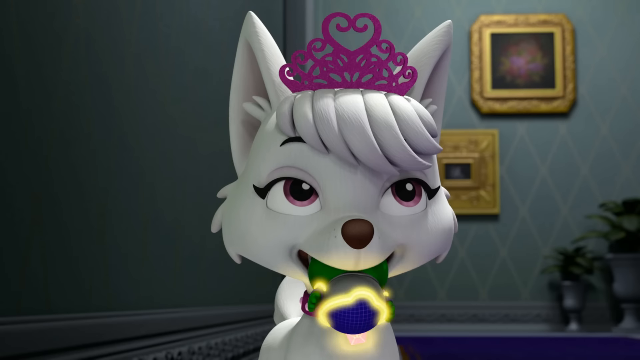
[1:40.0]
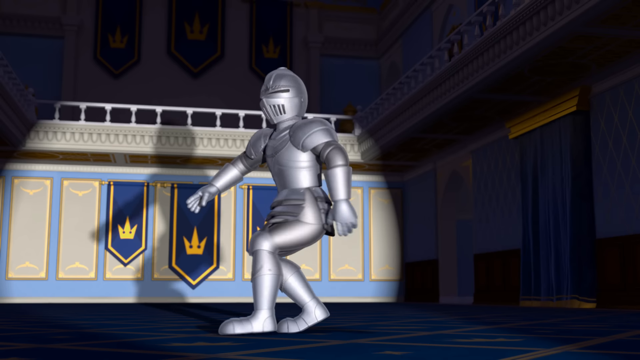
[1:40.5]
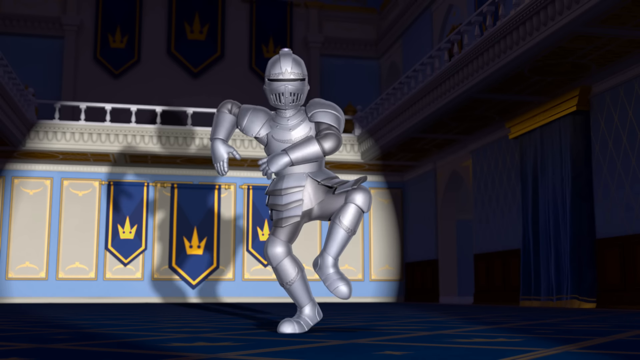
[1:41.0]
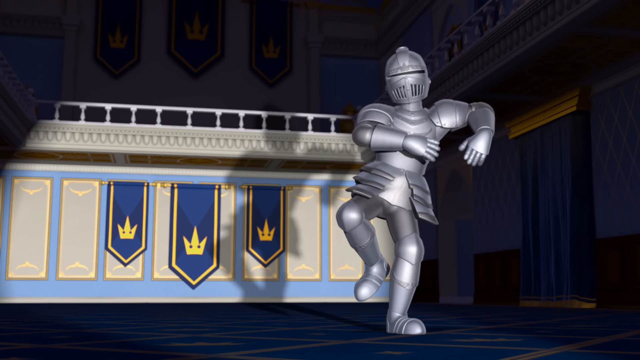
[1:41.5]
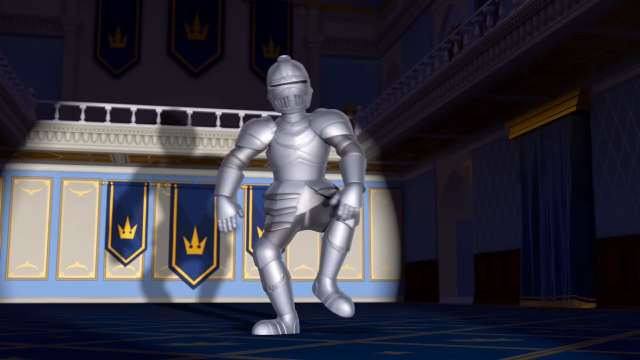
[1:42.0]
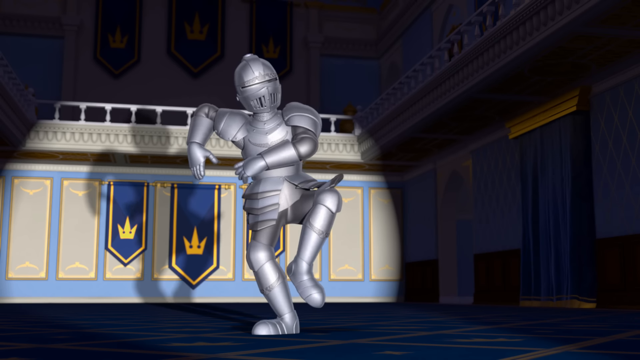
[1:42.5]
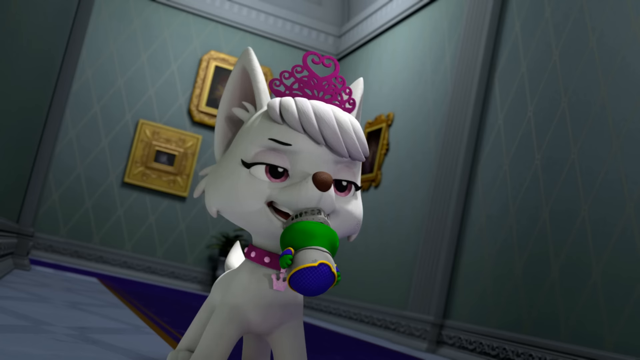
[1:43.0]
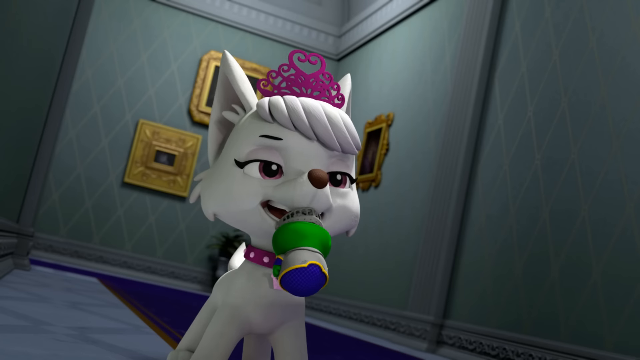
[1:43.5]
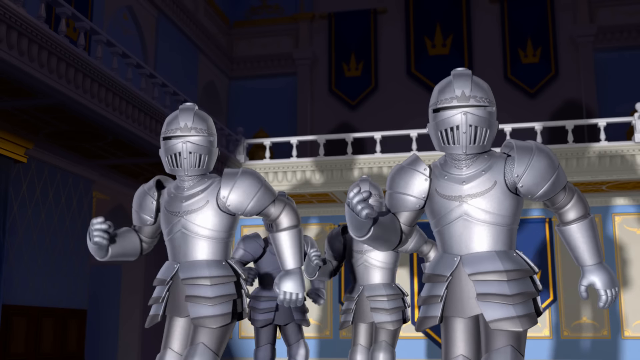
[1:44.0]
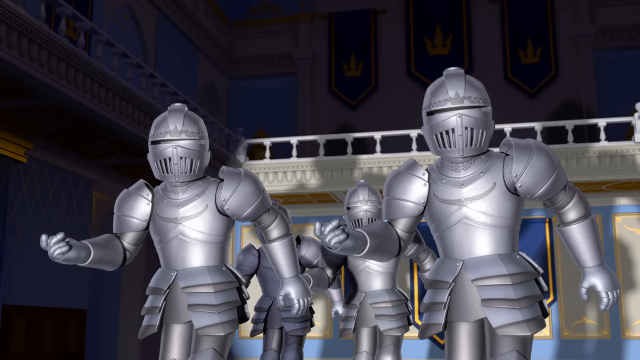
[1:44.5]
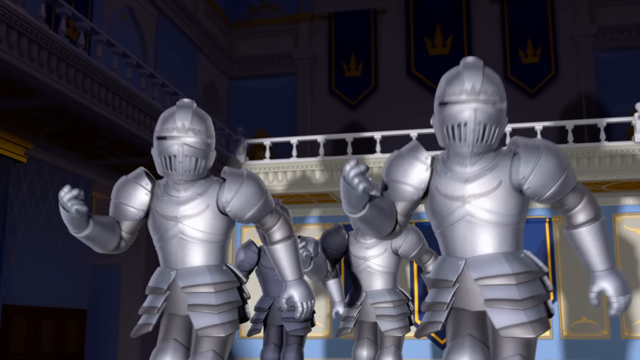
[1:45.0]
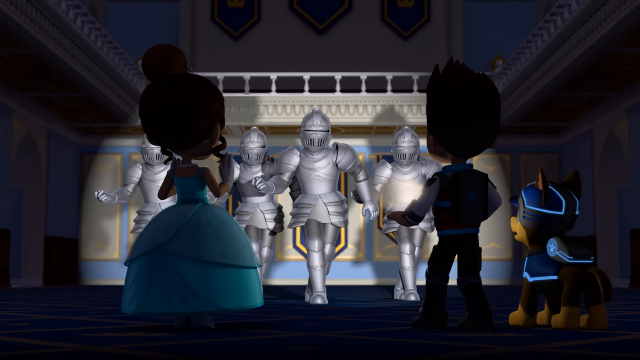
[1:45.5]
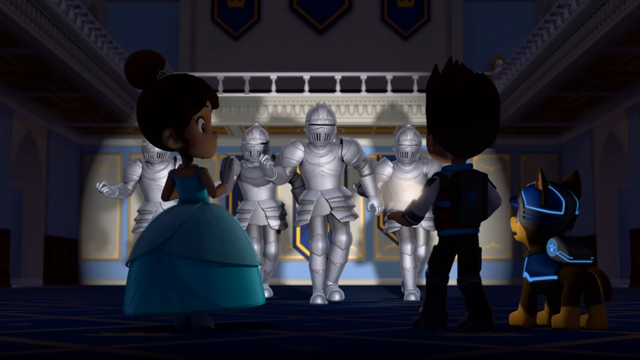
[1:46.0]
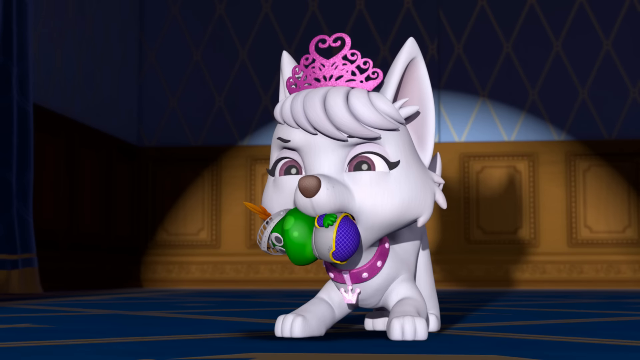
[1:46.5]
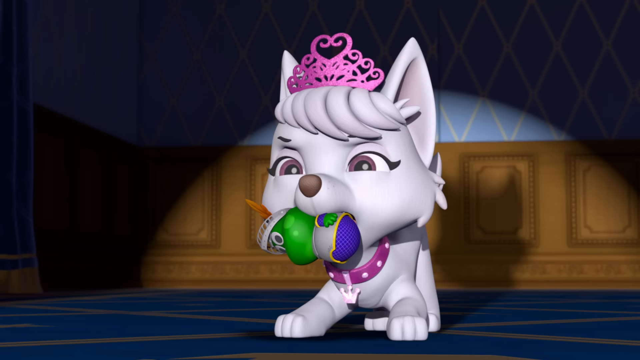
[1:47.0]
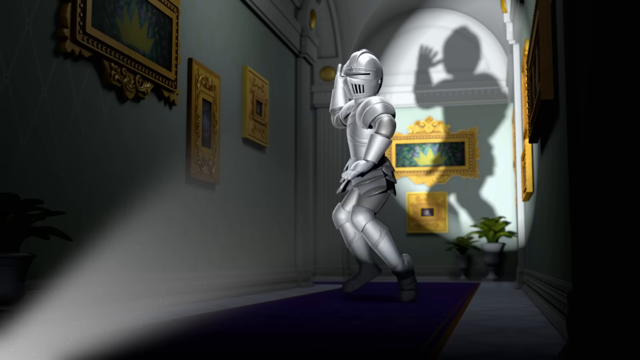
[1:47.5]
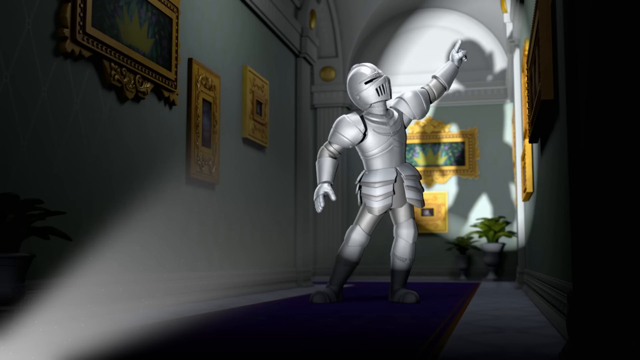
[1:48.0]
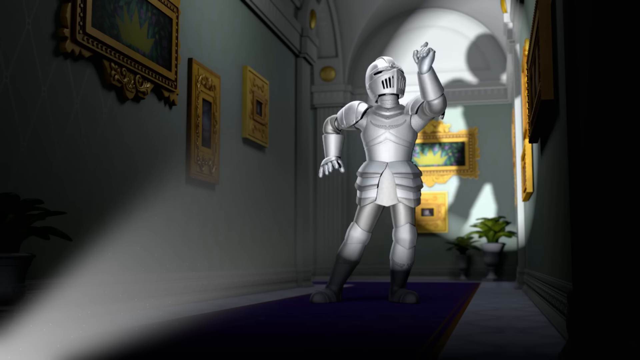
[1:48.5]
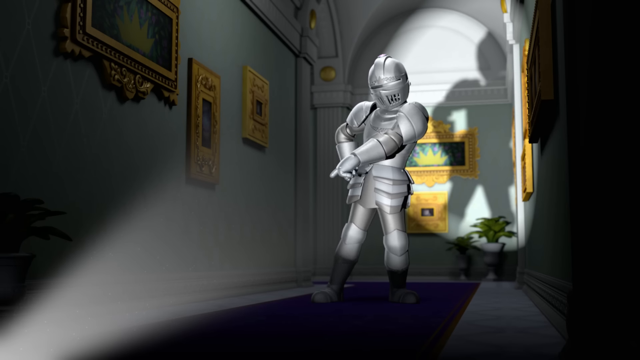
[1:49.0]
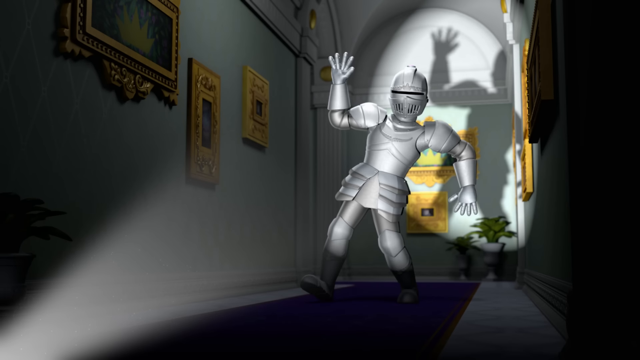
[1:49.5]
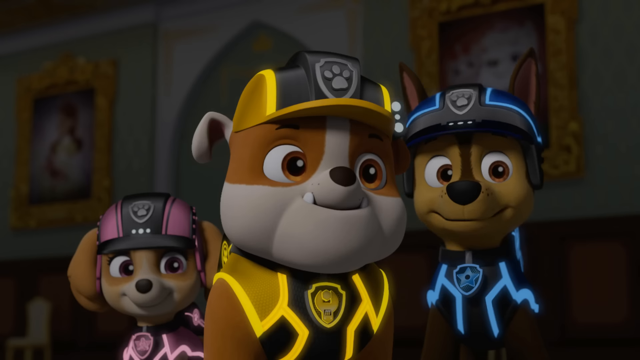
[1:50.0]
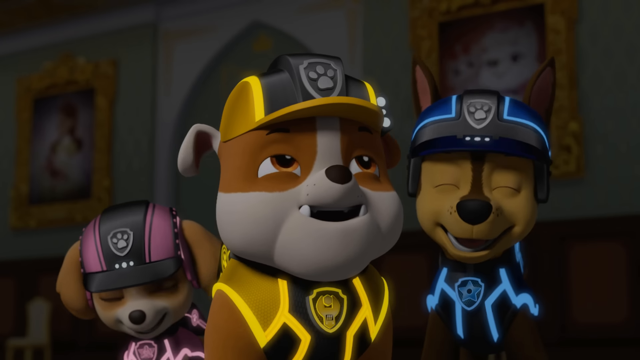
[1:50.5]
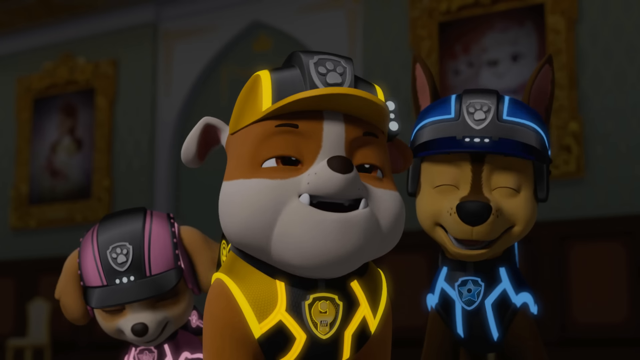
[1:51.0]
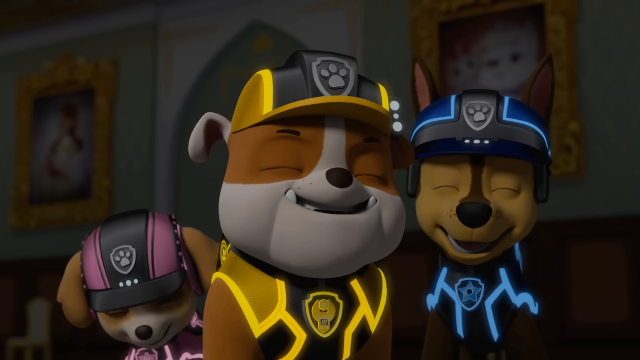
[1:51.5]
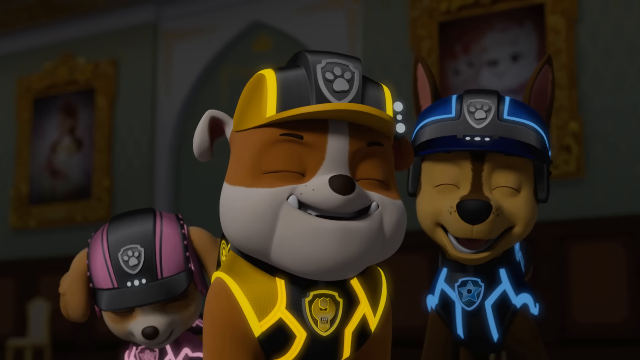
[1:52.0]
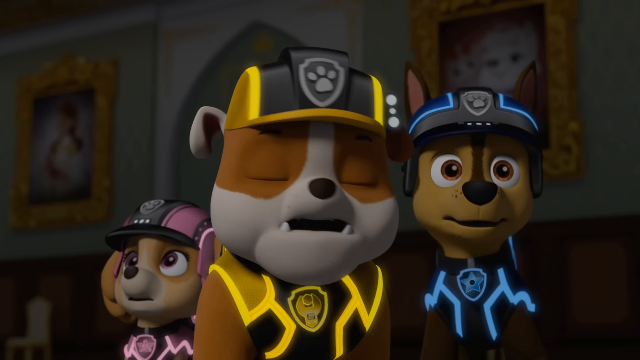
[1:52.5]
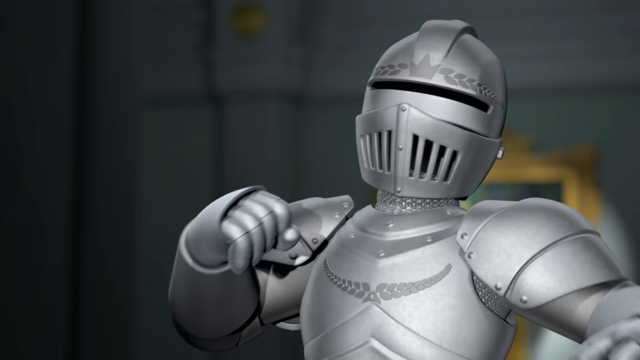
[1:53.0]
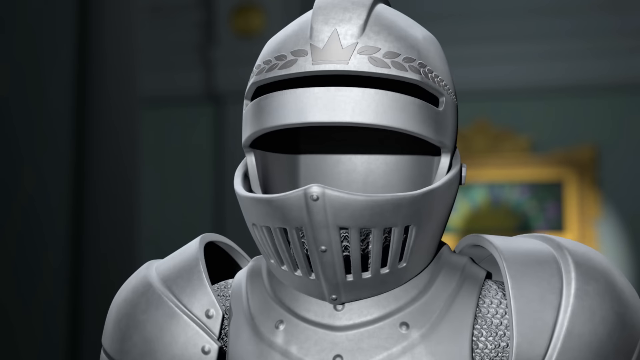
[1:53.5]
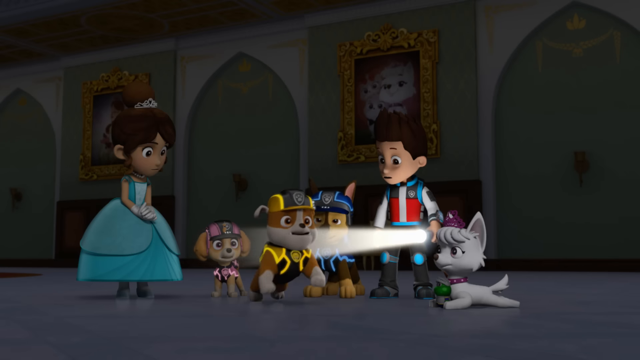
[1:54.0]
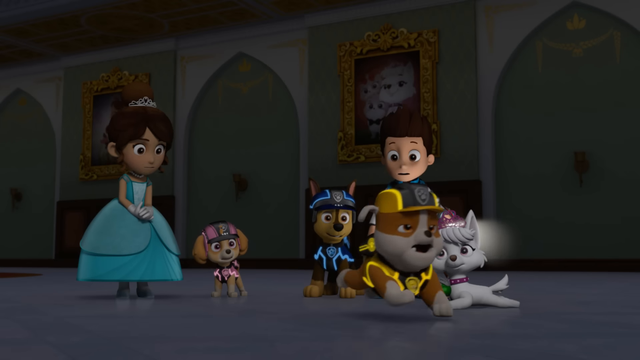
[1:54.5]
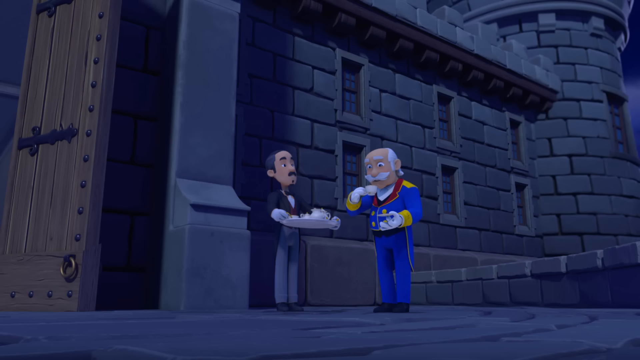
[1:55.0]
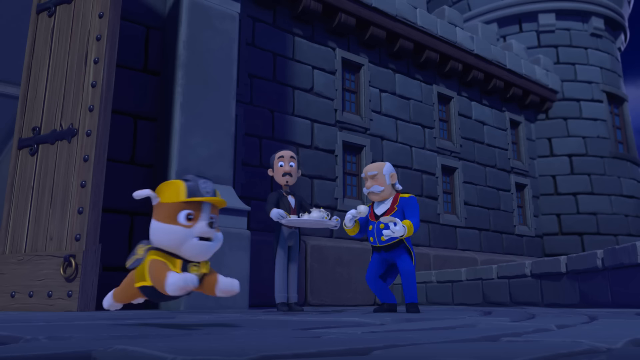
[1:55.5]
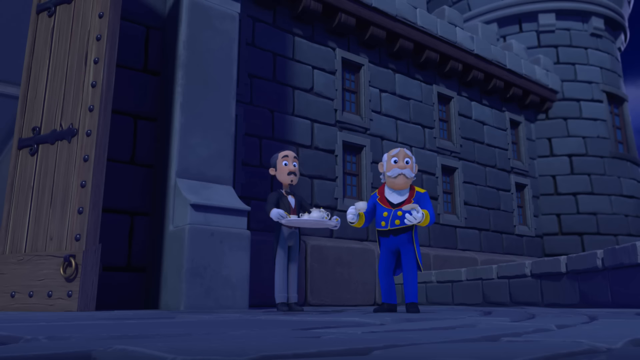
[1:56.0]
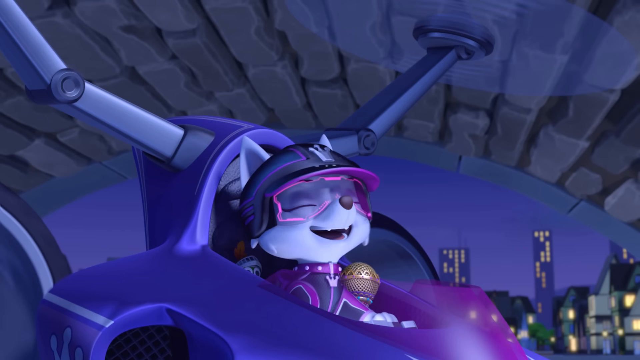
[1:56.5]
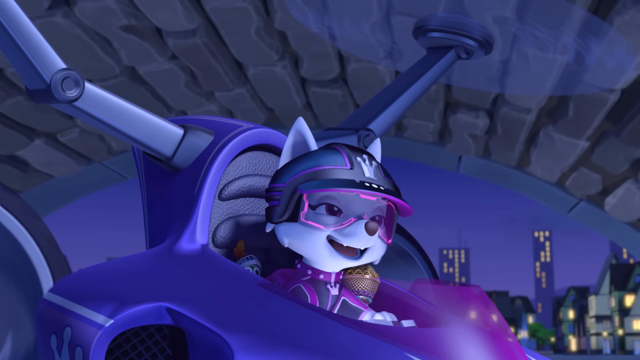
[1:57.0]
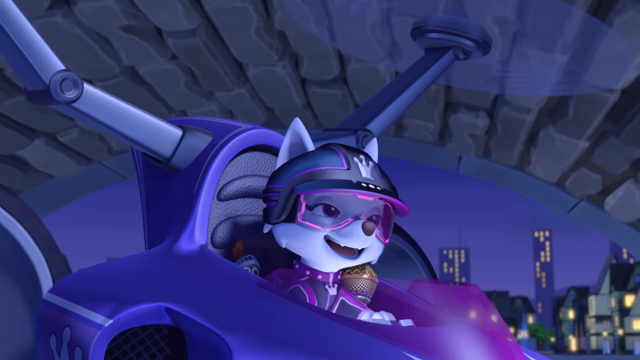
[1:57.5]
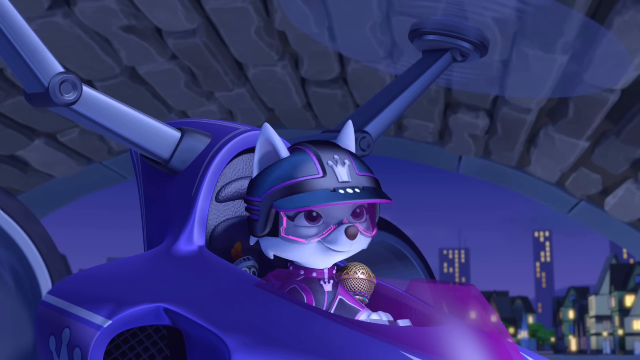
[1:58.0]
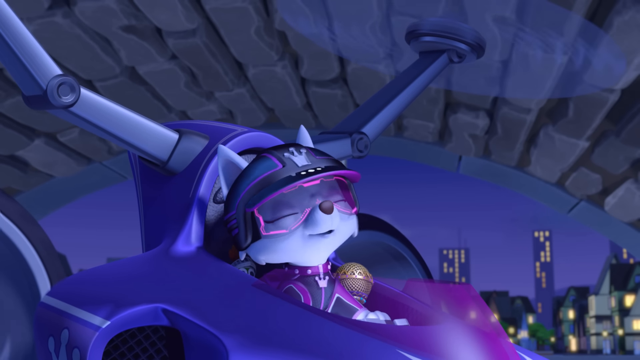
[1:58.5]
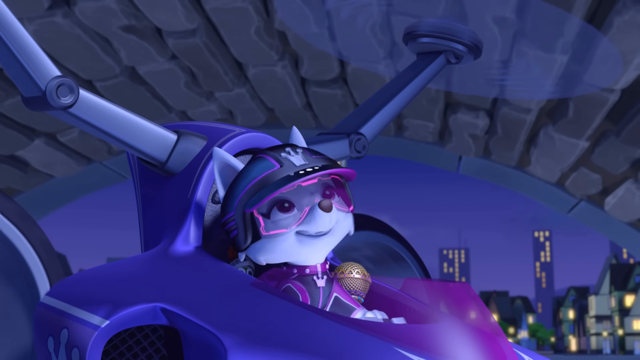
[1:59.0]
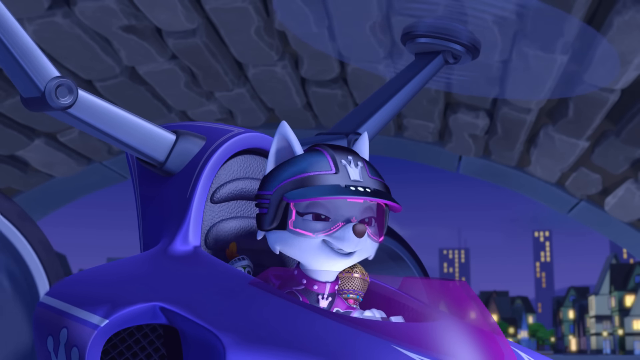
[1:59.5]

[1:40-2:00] The white dog, wearing a pink crown, looks towards the camera, with two golden frames on the wall behind her. A suit of armour dances from side to side, with three flags behind it. The white dog holds her small green creature in her mouth while she watches the suit of armour dance, silhouetted by a spotlight with a shadow behind. Several suits of armour then dance, with more golden frames on the wall behind. More dogs appear: one in a blue suit, one in a yellow suit and one in a pink suit. They laugh and nod, then look up in shock to their right-hand side. The dogs run out of the castle, and the butler and another member of staff are outside. The white dog gets into a vehicle.